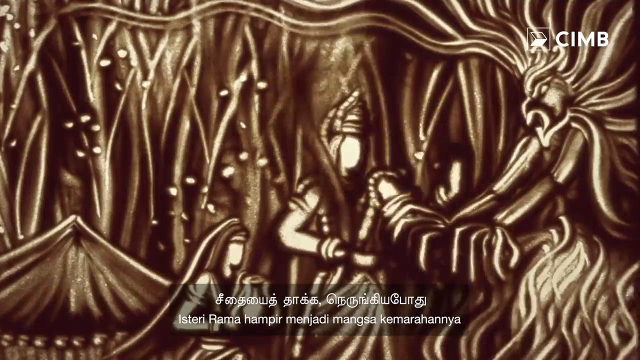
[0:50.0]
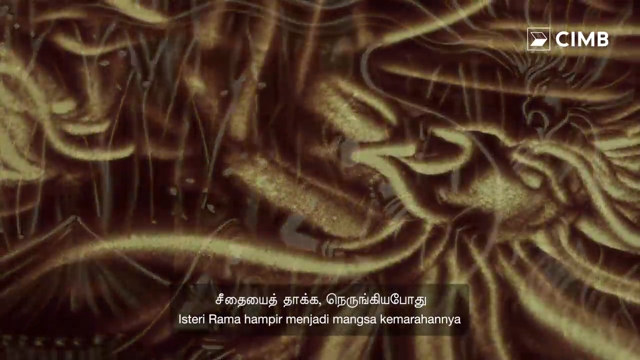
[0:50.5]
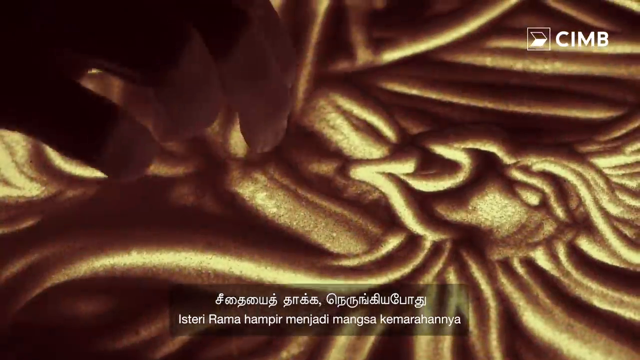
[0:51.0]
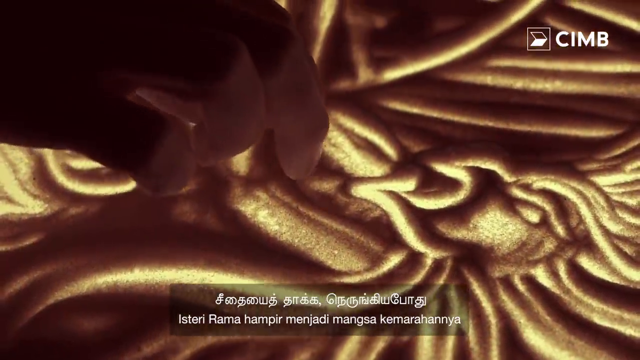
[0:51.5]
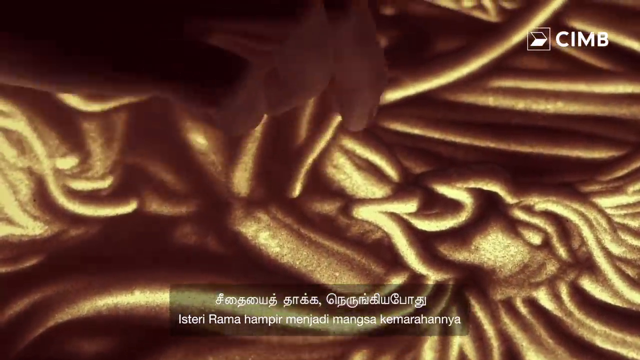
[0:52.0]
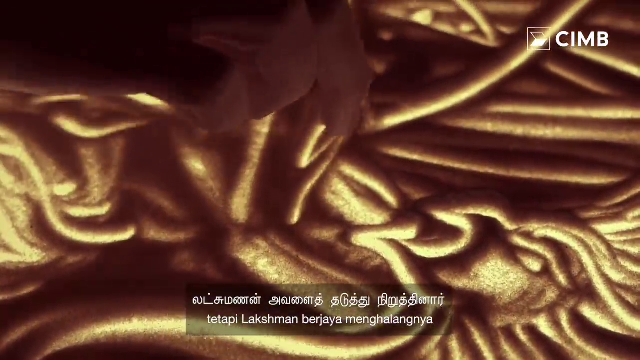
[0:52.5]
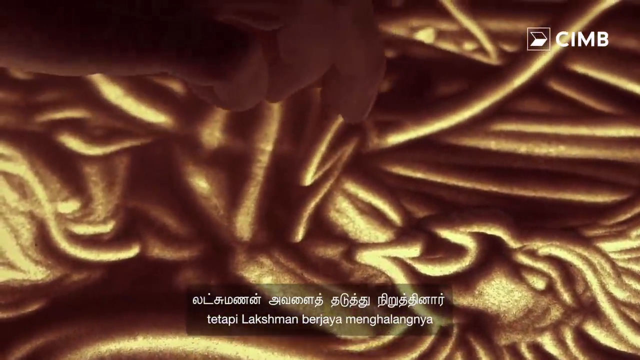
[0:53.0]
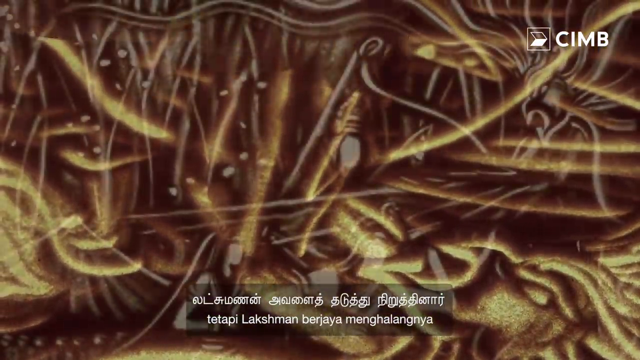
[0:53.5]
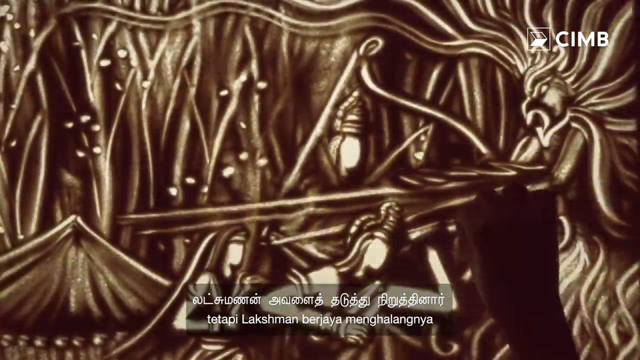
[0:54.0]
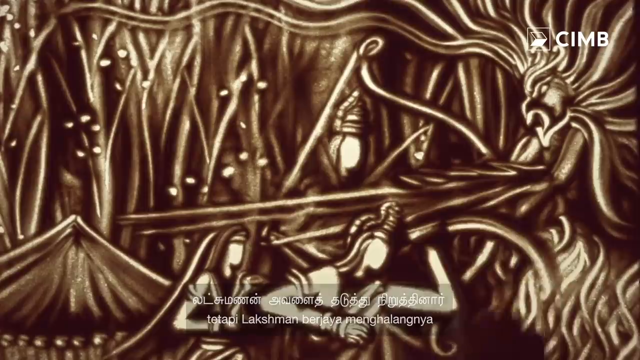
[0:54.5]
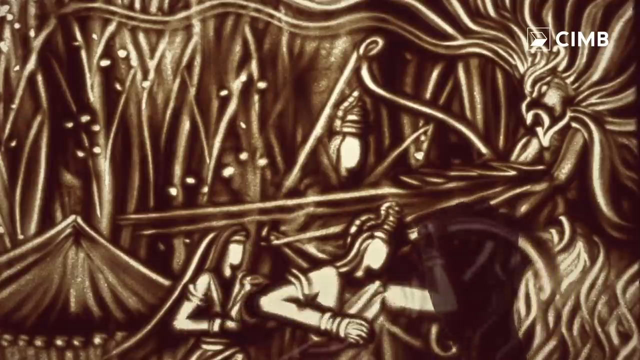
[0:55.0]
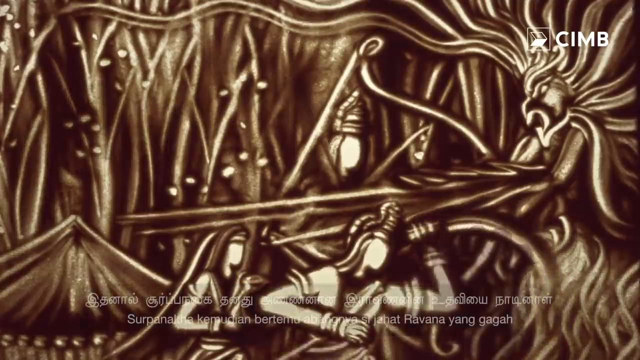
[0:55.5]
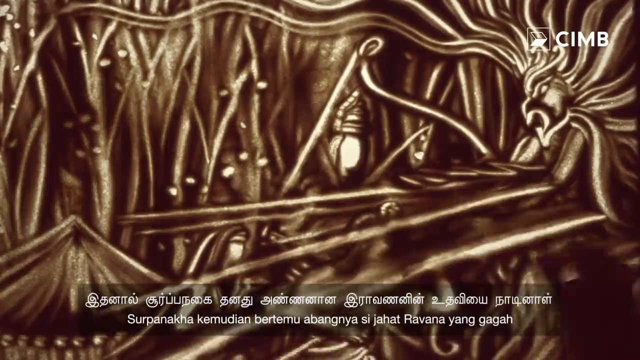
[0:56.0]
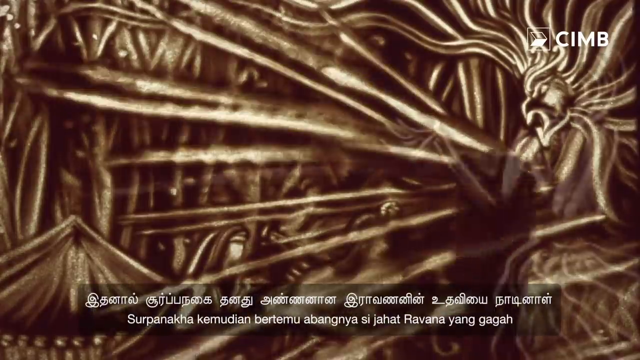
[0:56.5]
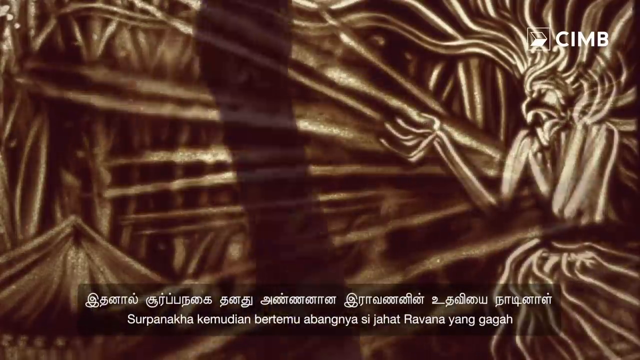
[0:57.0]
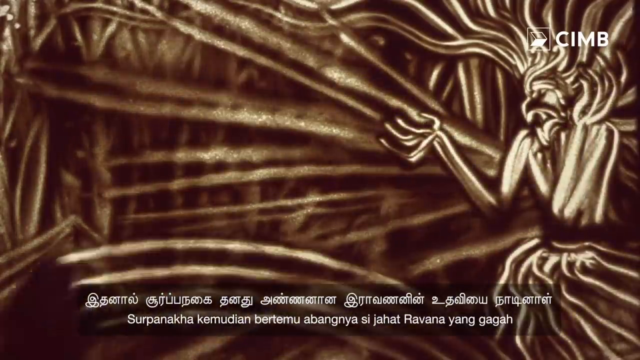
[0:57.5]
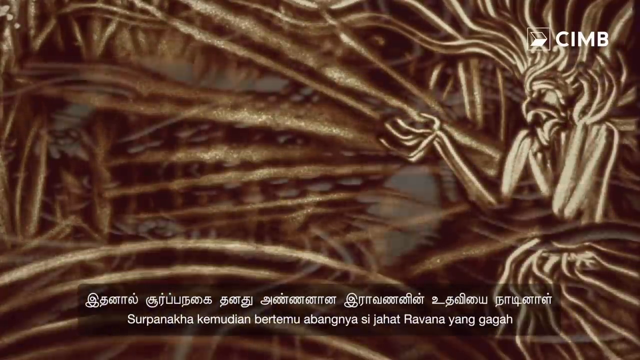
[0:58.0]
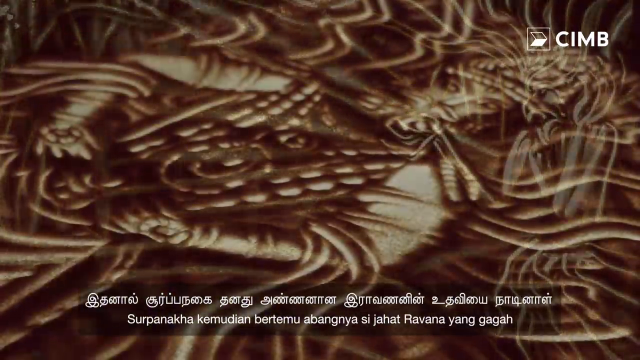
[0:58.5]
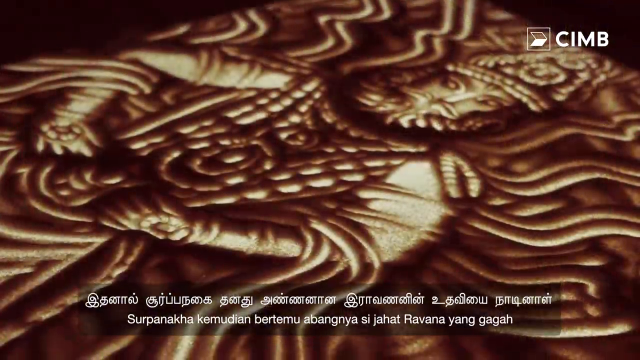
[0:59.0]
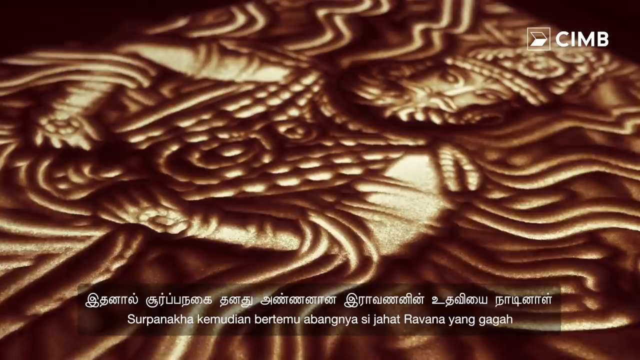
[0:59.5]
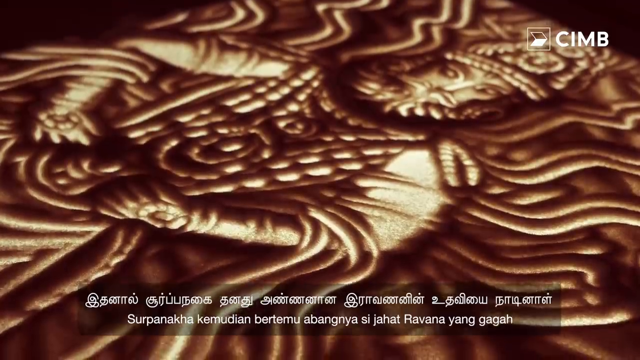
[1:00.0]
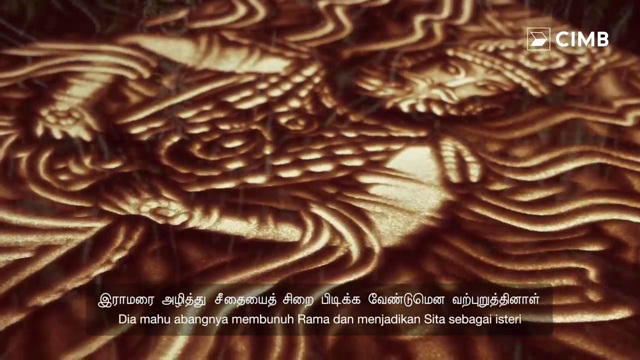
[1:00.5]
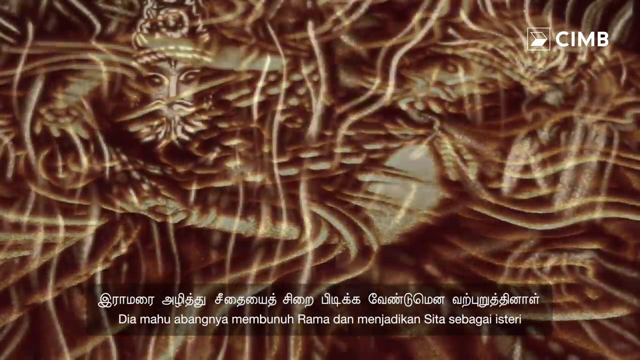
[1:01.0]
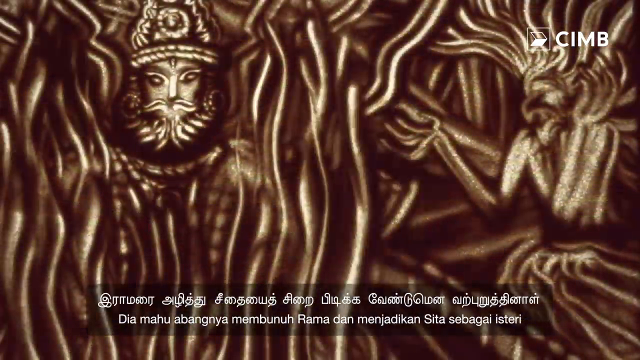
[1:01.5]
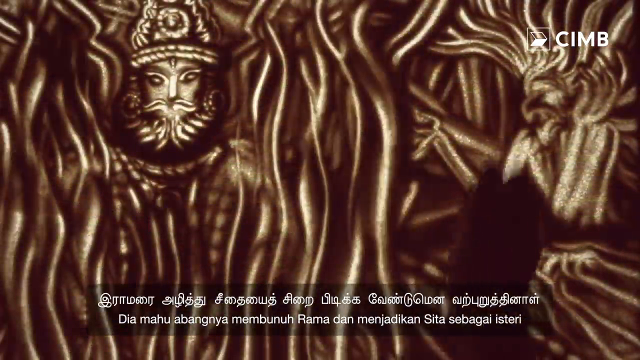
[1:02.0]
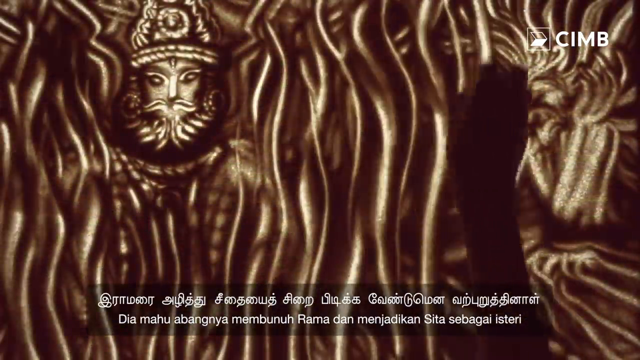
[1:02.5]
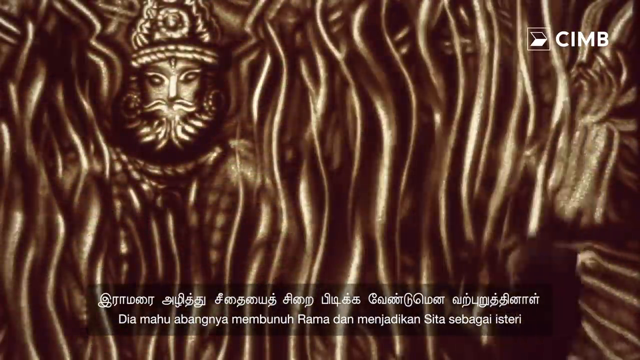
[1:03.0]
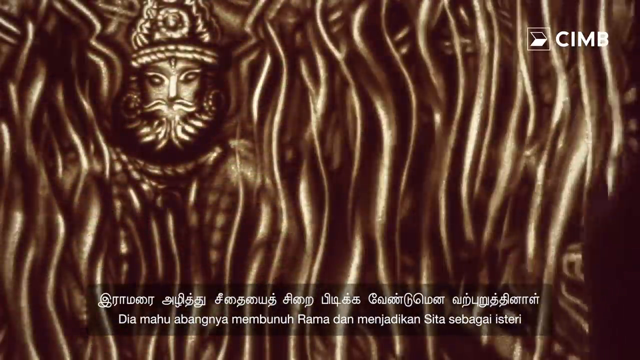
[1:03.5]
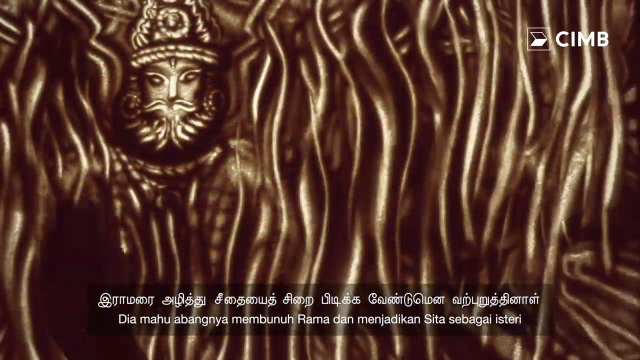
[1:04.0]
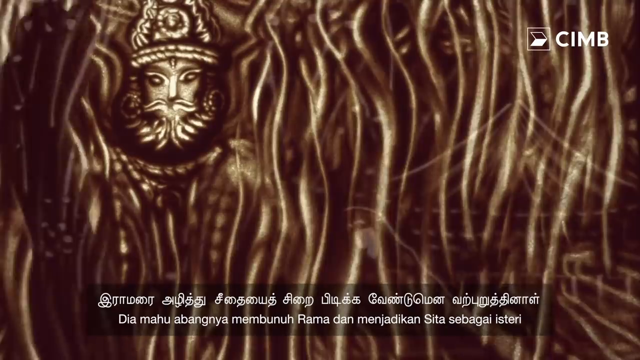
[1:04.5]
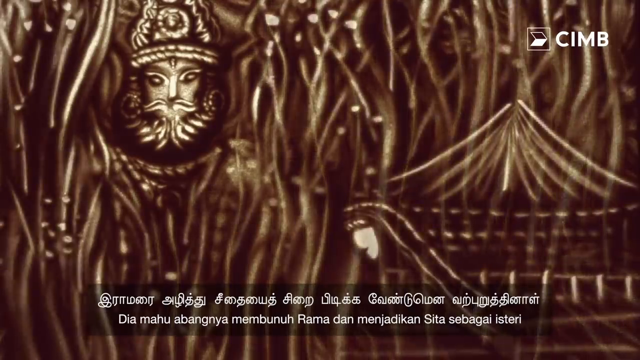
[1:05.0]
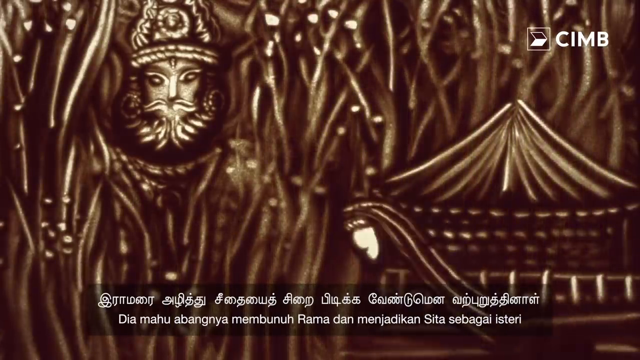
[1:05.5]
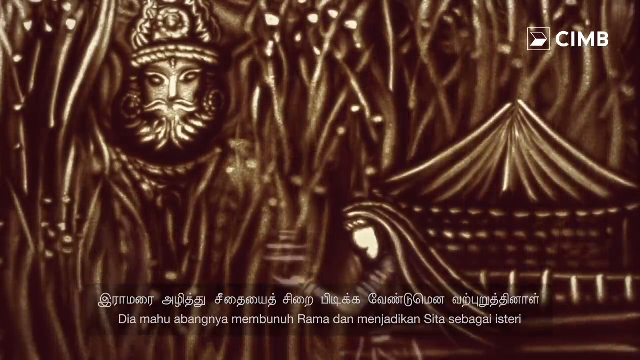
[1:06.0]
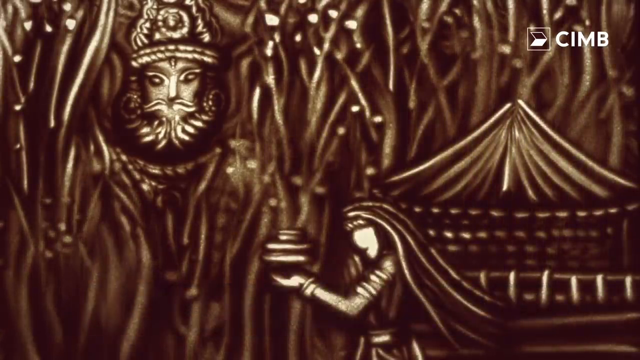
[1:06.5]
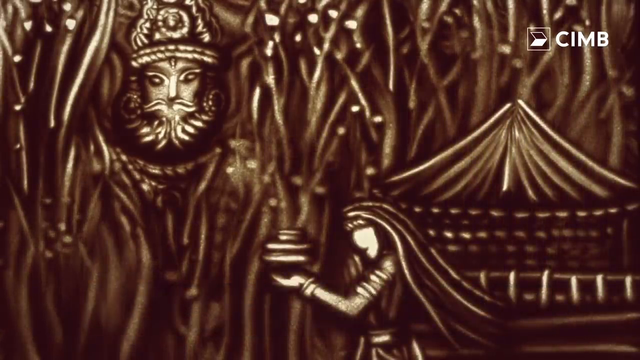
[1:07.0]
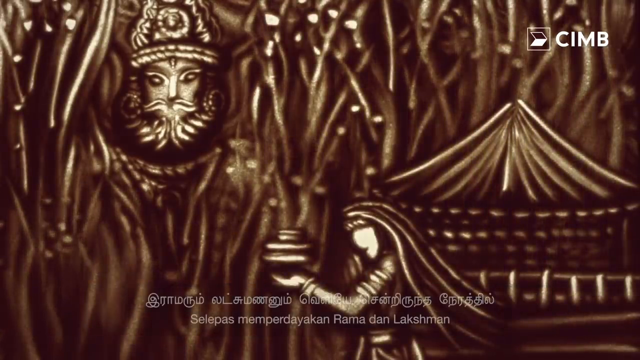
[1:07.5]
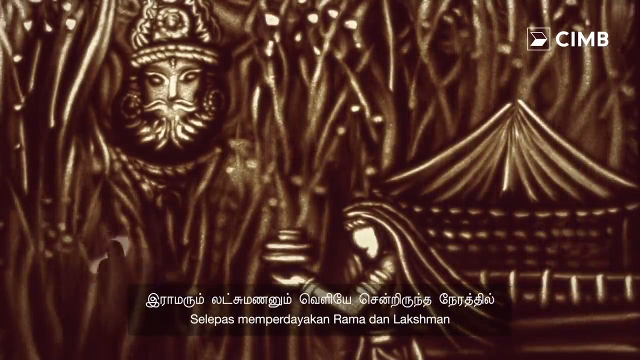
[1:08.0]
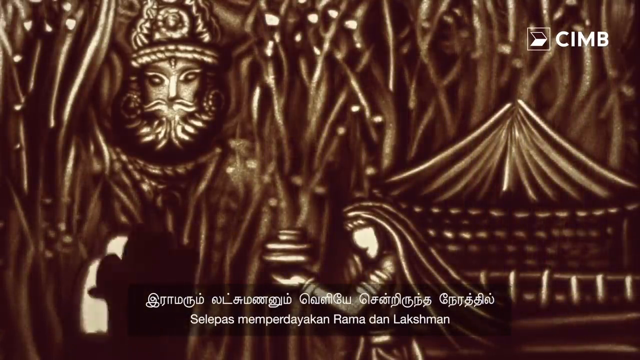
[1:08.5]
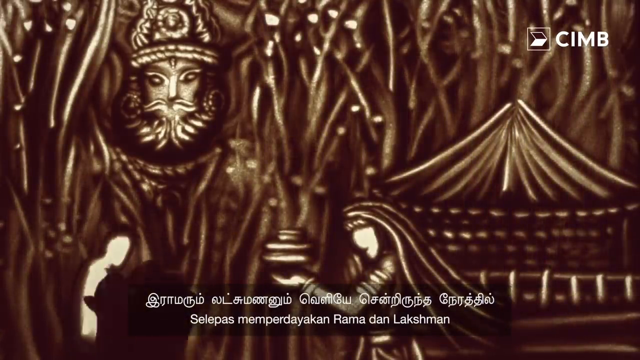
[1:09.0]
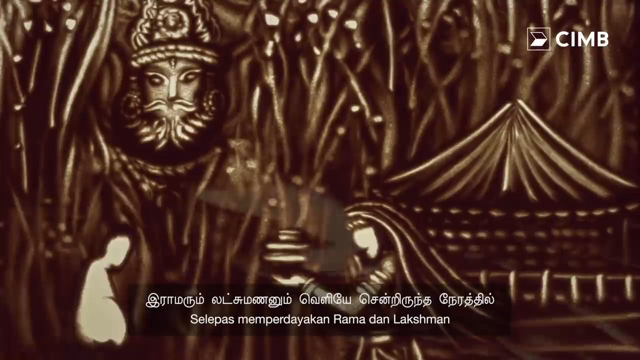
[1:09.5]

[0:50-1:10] Someone's hand makes different lines on the artwork before the view shifts to an overall view showing the same lion-masked individual with more details than before. A hand quickly covers those details, and the screen flashes to a king-like figure. An arm moves in fast speed, making squiggles in the sand artwork, and the face of a king appears, seemingly with a beard and a mustache, and with a crown on top of his head. The person's hand creates details around the king figure, including a woman kneeling and some type of tent. Someone then works on further details of the artwork. Most of the imagery is bronze, brown, black, and a light yellow or white, with no other colors.